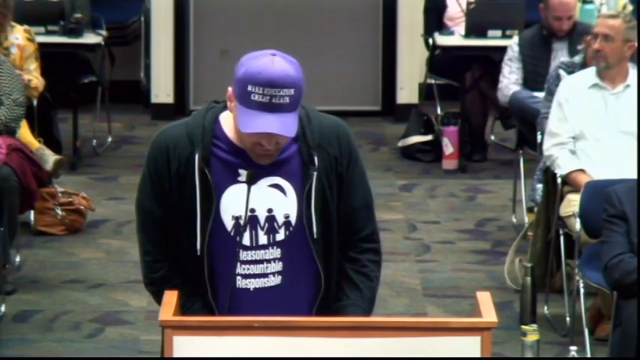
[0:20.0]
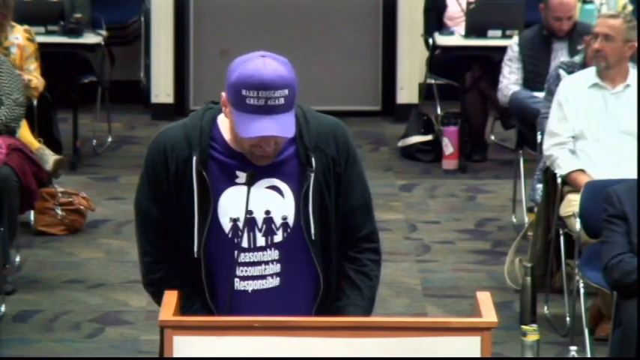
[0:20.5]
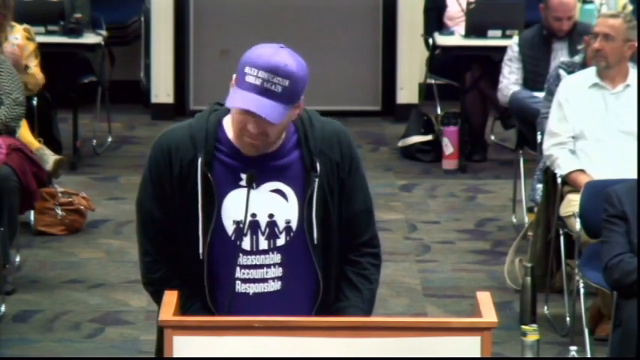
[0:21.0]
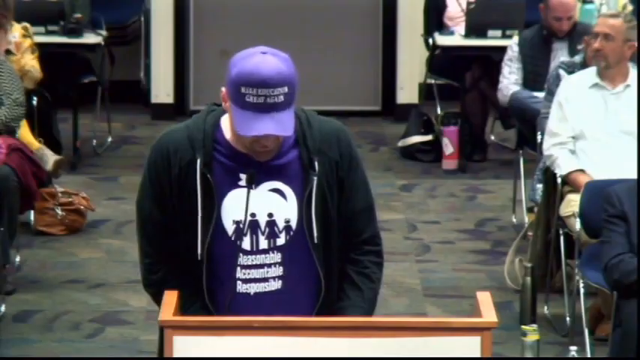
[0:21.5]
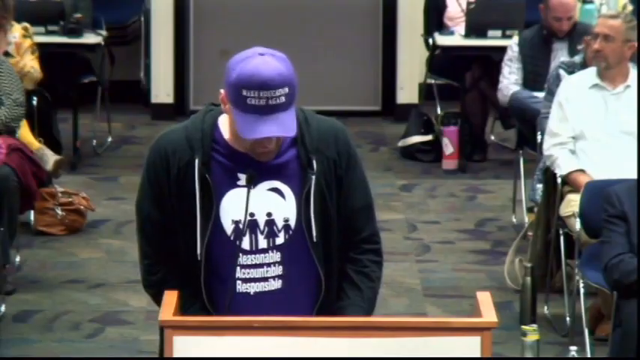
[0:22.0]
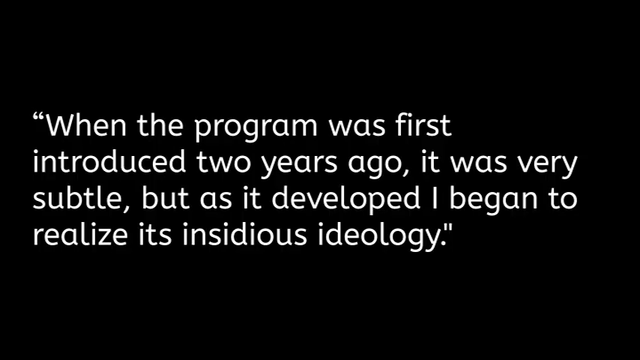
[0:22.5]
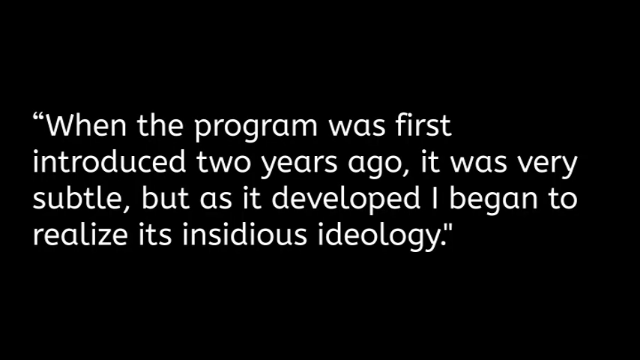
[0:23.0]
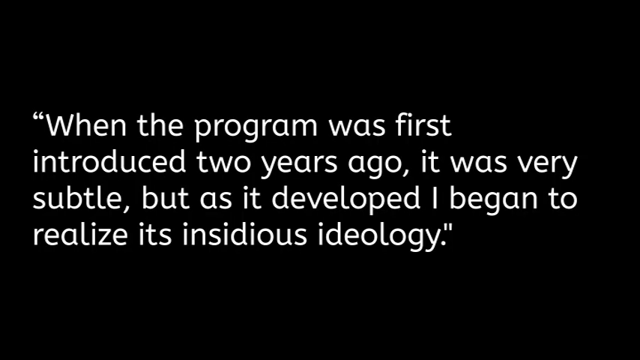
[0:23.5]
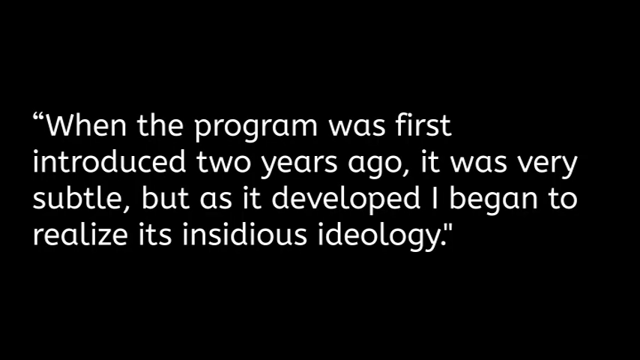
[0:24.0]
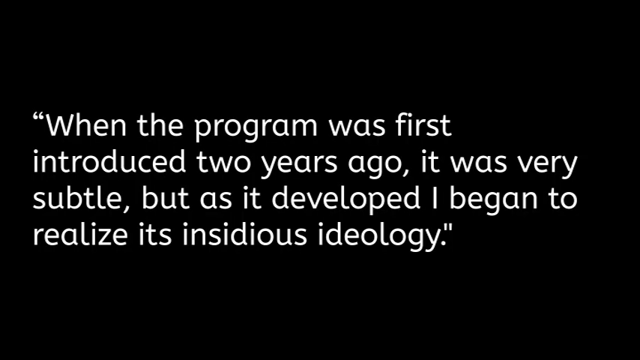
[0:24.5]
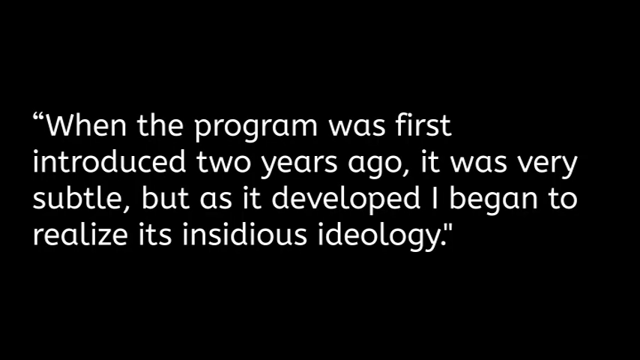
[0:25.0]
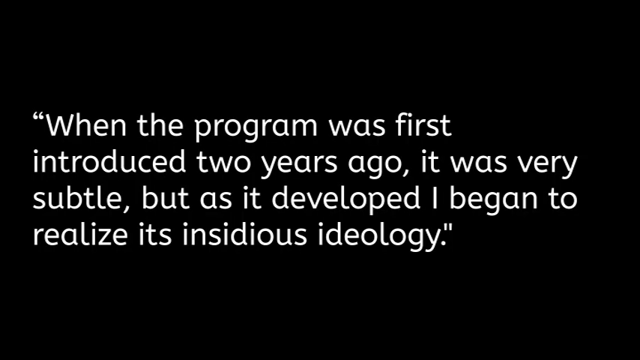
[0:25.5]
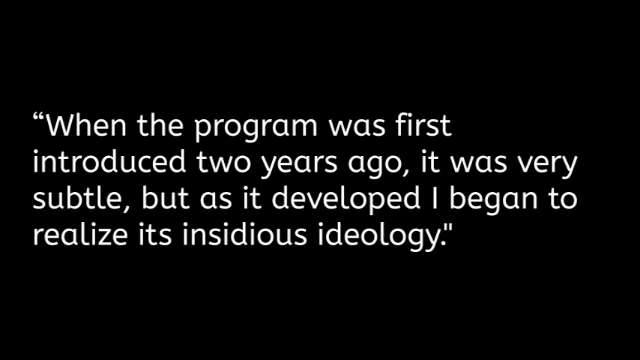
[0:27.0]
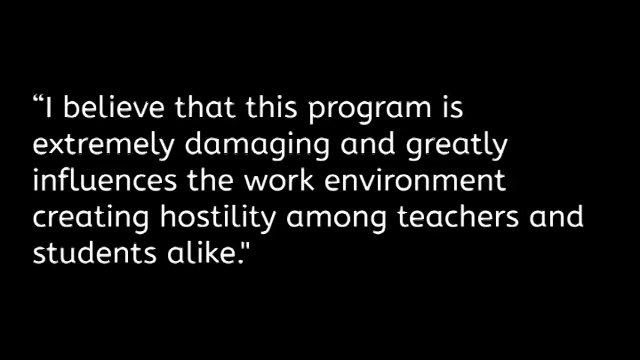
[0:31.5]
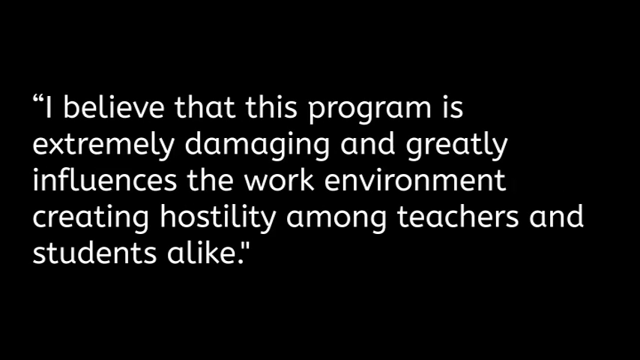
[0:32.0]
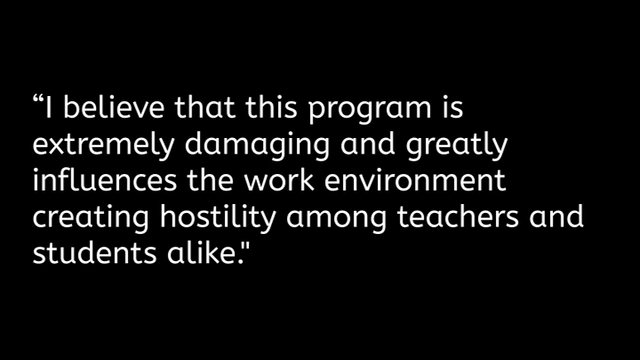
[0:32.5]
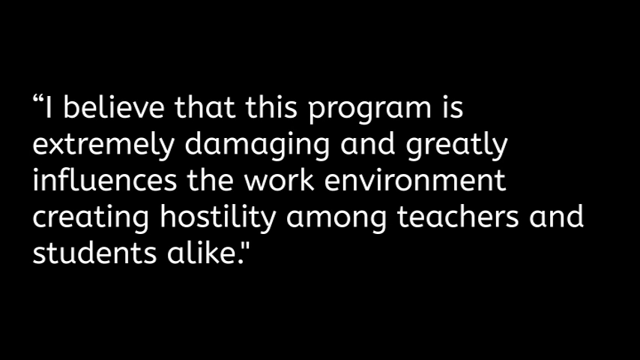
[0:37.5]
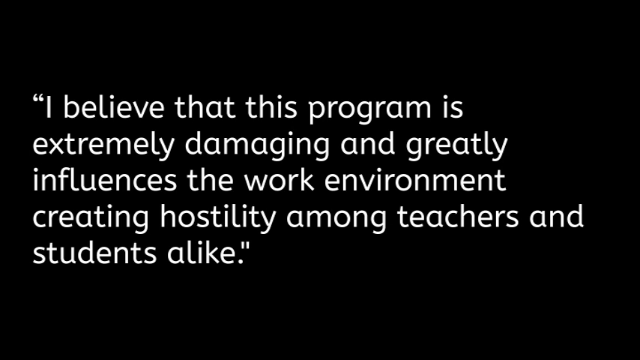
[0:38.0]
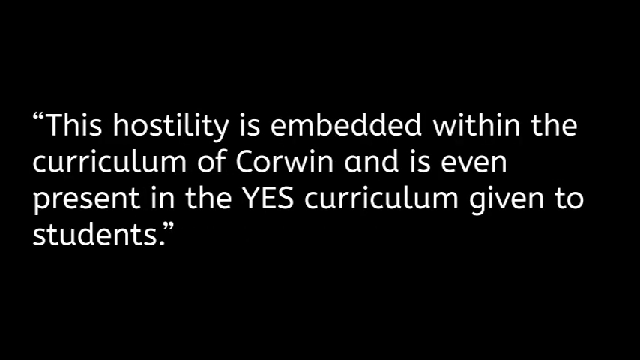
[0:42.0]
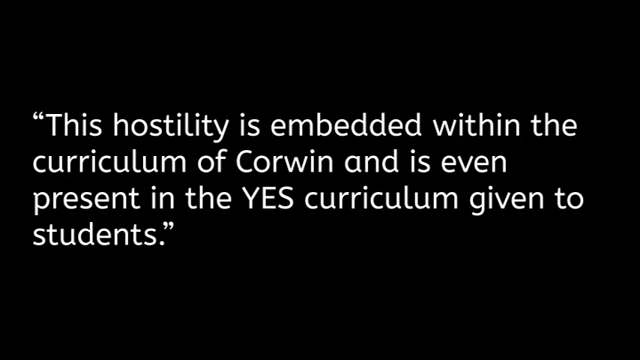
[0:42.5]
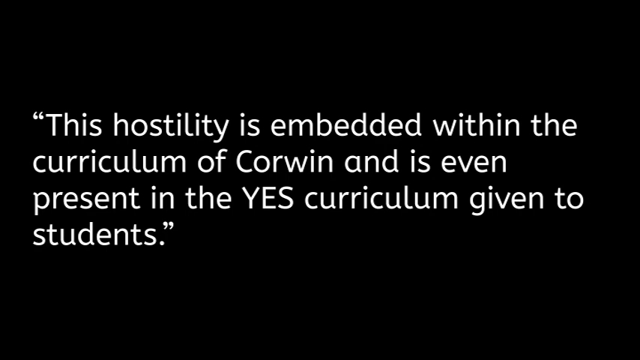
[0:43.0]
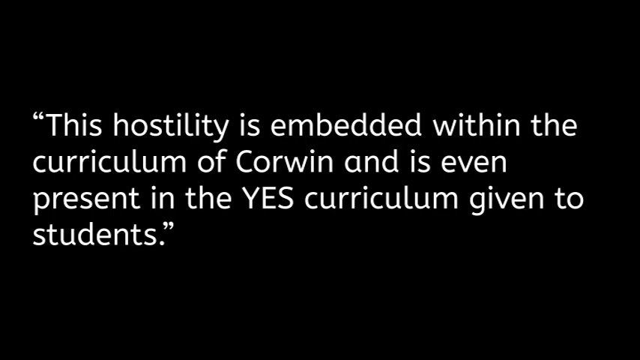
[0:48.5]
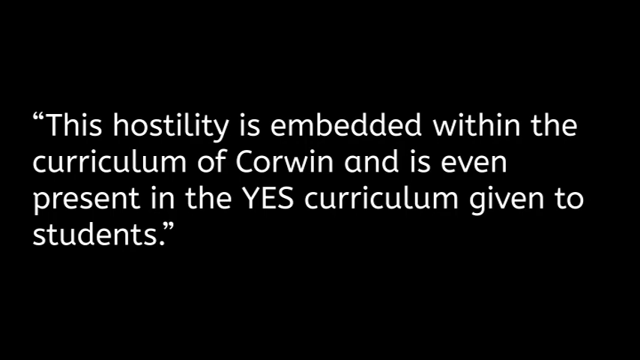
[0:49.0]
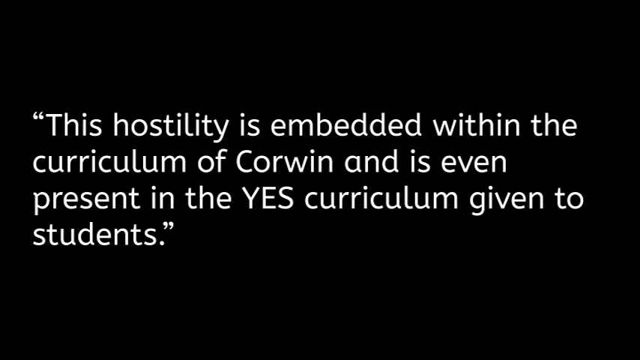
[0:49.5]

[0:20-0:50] A white man is talking, and text appearing to quote what he is saying is printed on the screen in white on a black background: "I believe that this program is extremely damaging and greatly influences work environment, creating hostilities to our teachers," followed by "this hostility is embedded within the curriculum." The video returns to the man talking. The rest of the statement reads: "it was very subtle, but as it developed, I began to realize it's insidious potential. I believe that this program is extremely damaging and greatly influences the work environment, creating hostility among teachers and students alike. This hostility is embedded within the curriculum of Corwin." Some of the words on his hat say "make great again."